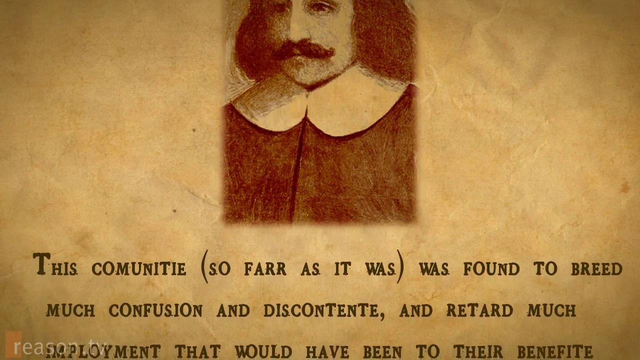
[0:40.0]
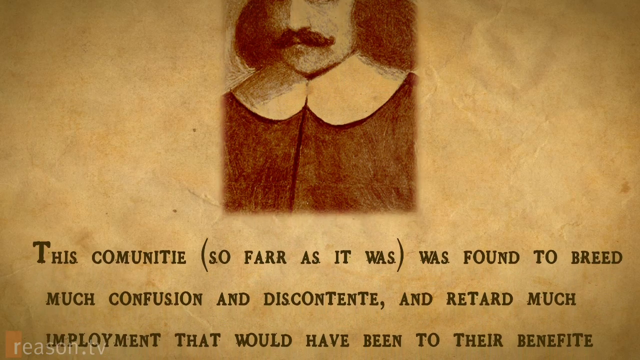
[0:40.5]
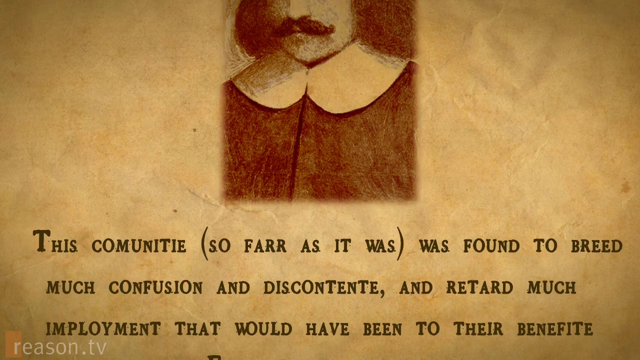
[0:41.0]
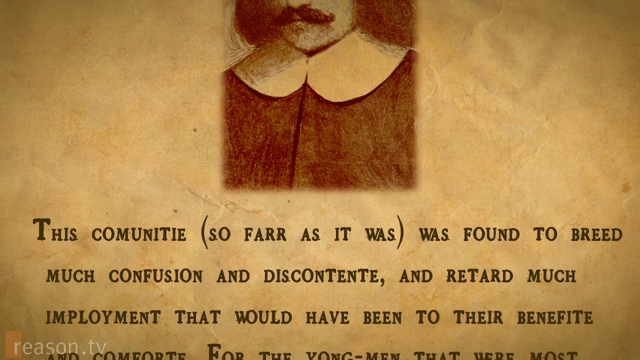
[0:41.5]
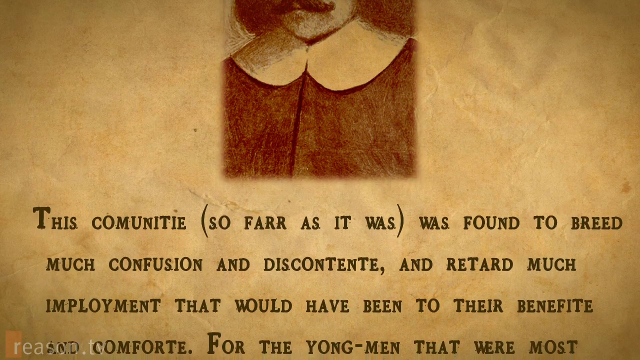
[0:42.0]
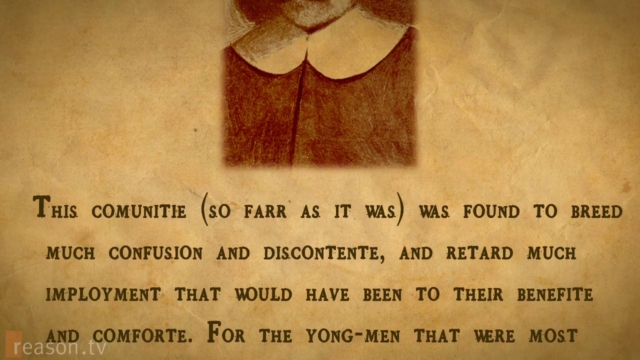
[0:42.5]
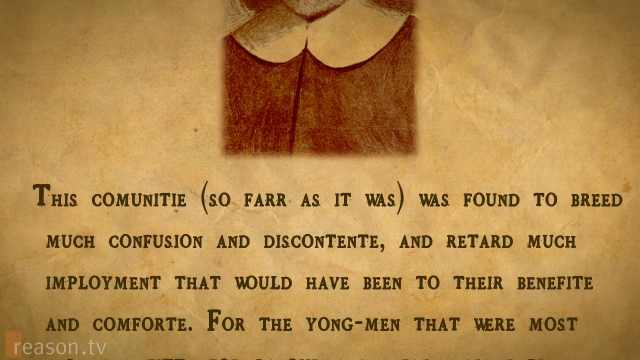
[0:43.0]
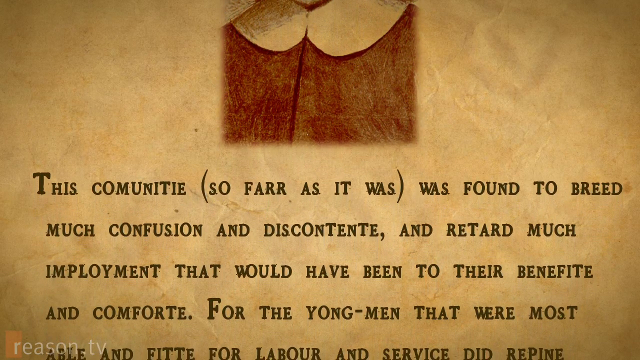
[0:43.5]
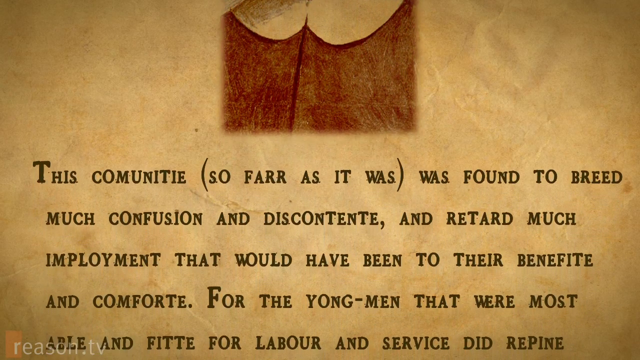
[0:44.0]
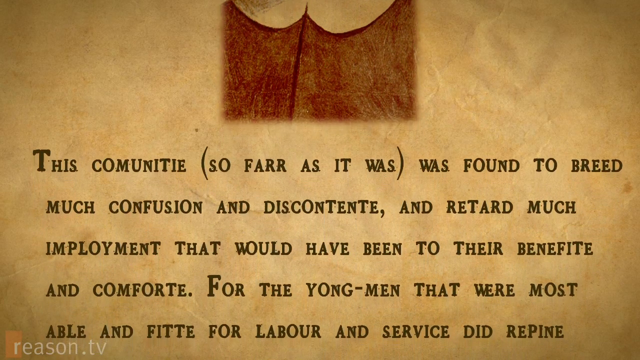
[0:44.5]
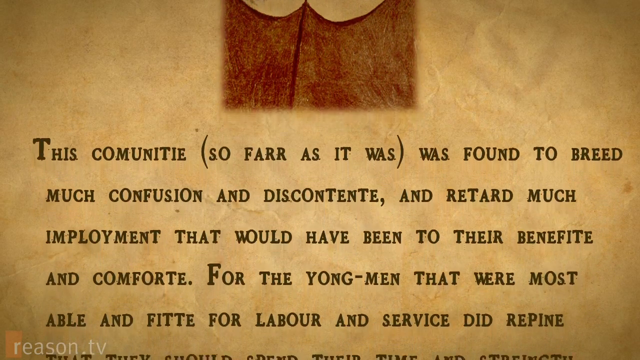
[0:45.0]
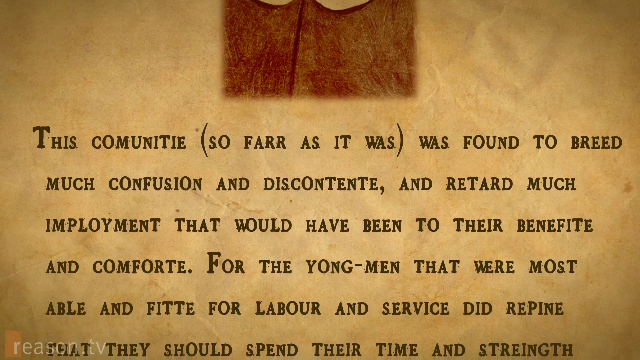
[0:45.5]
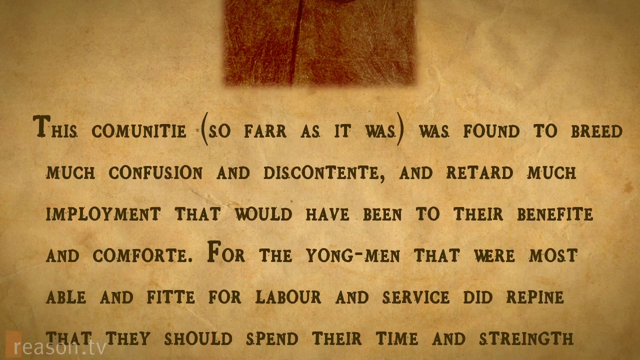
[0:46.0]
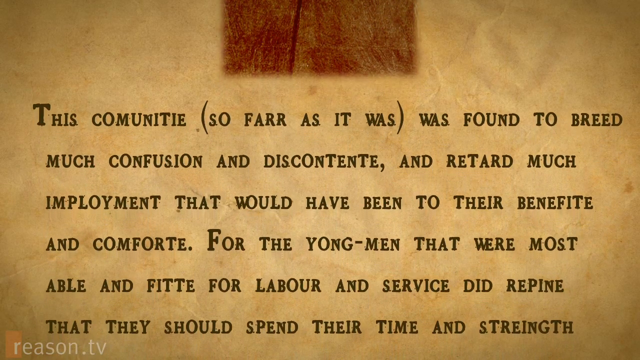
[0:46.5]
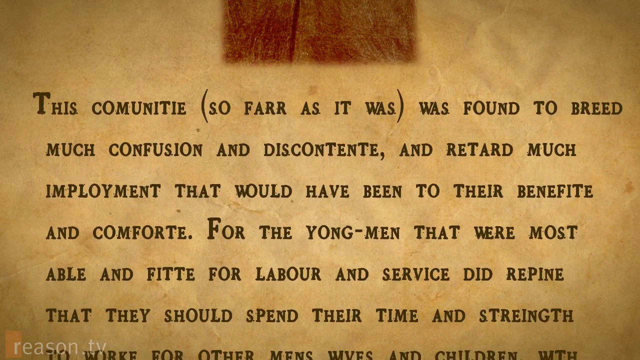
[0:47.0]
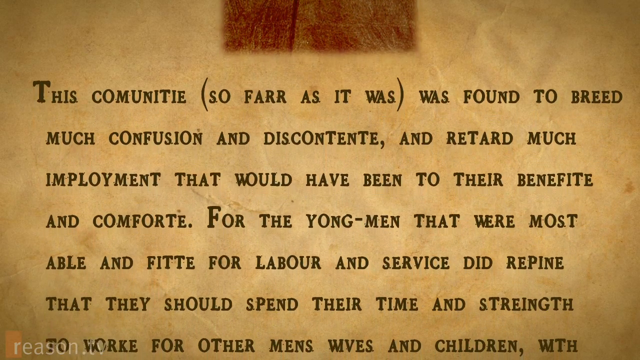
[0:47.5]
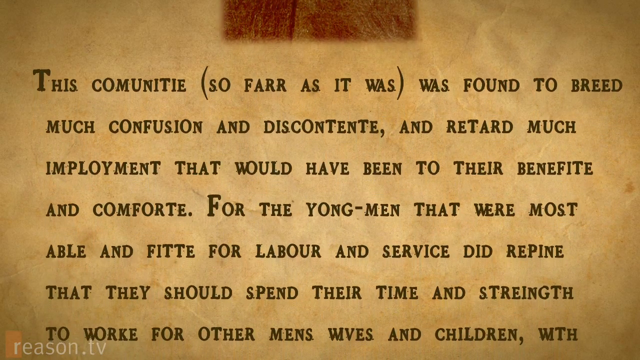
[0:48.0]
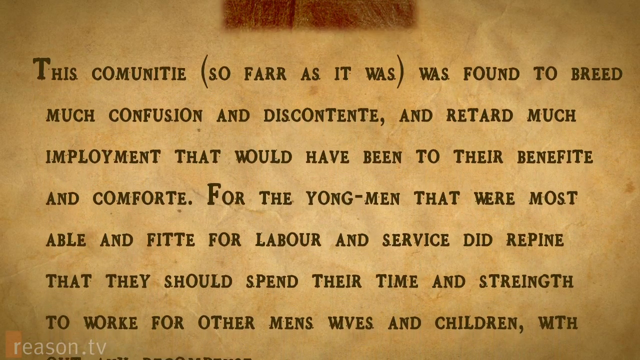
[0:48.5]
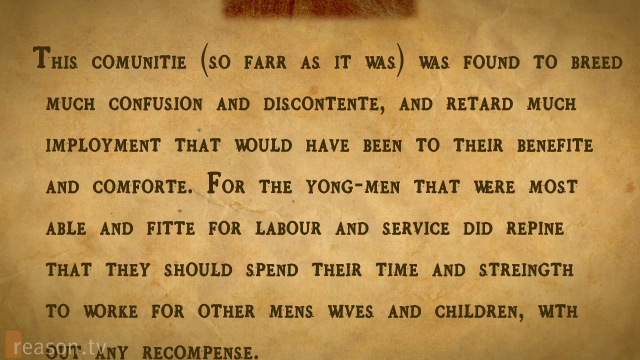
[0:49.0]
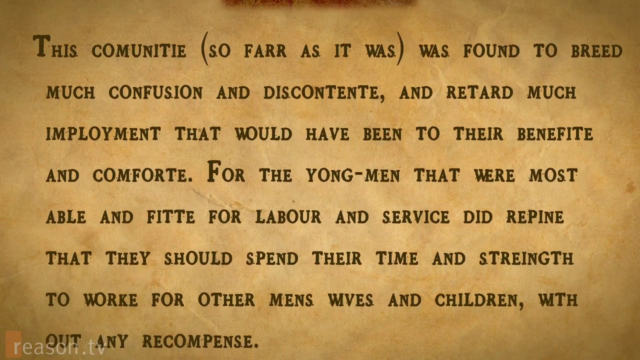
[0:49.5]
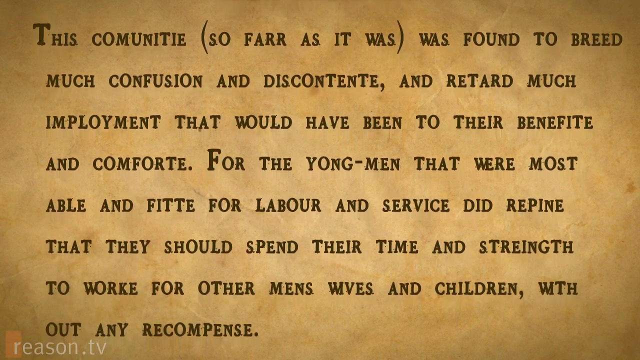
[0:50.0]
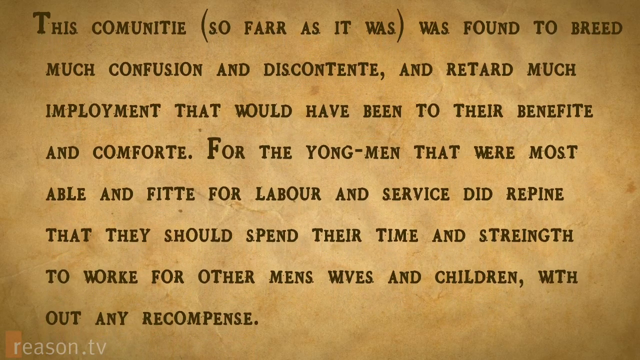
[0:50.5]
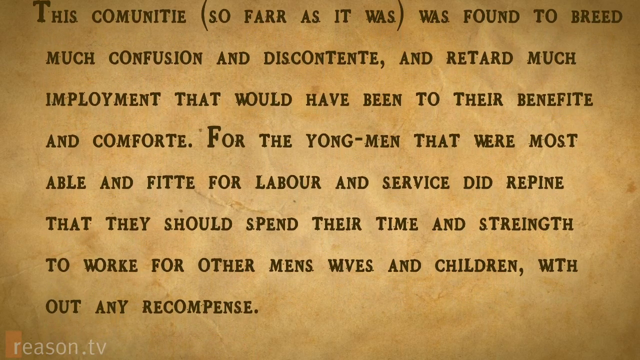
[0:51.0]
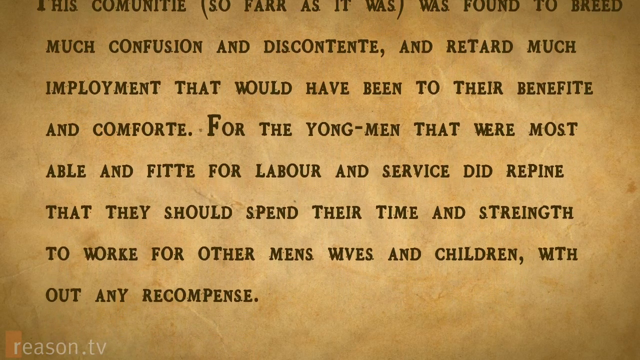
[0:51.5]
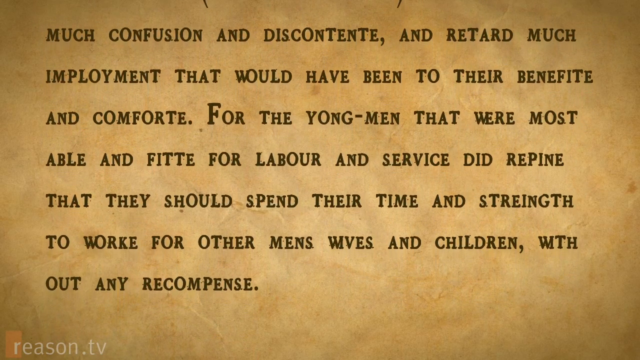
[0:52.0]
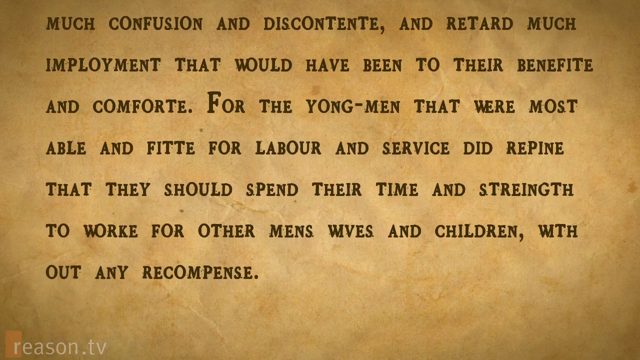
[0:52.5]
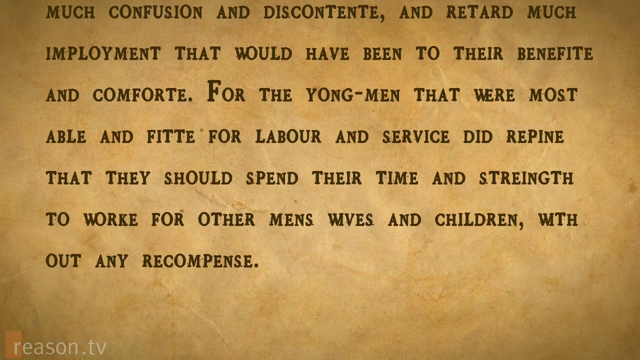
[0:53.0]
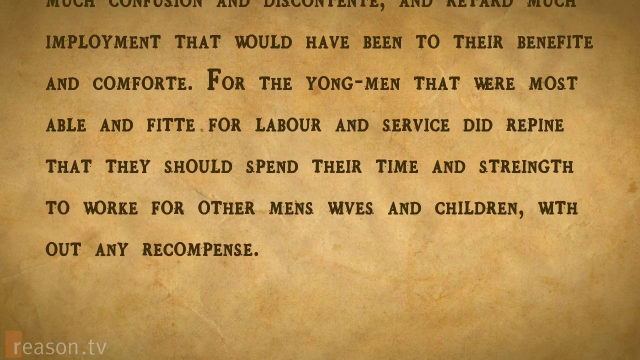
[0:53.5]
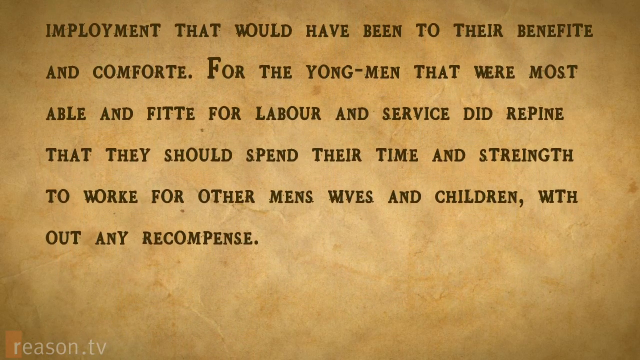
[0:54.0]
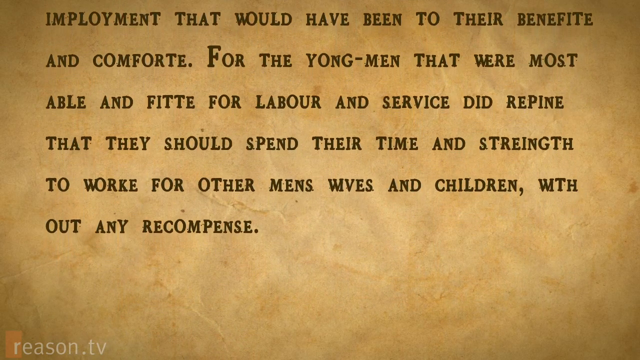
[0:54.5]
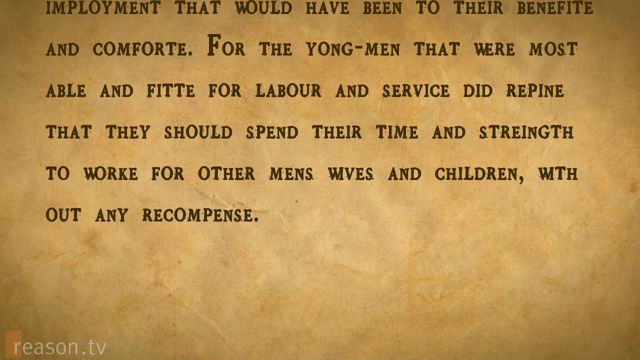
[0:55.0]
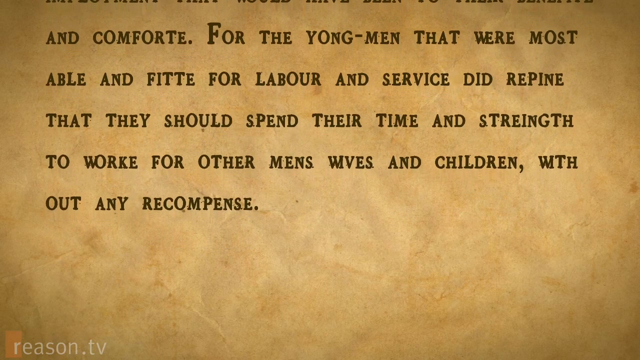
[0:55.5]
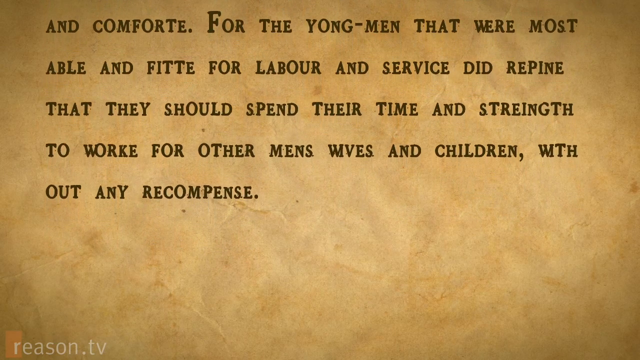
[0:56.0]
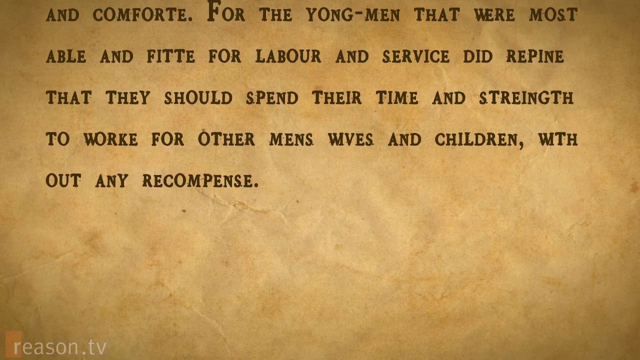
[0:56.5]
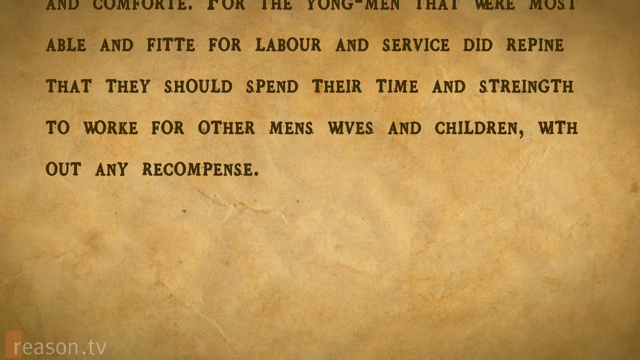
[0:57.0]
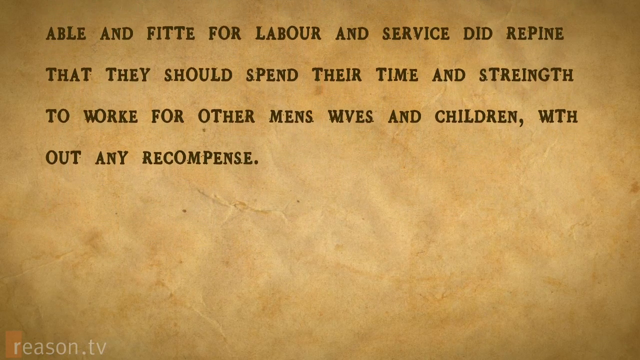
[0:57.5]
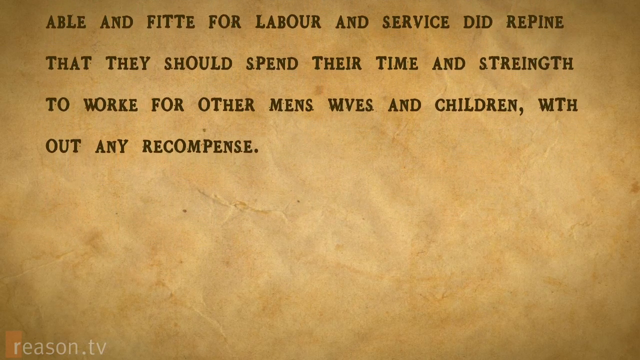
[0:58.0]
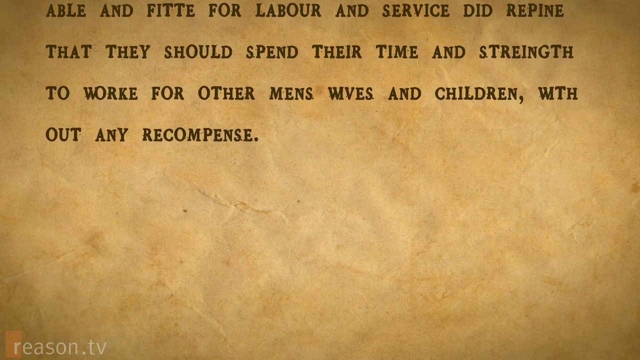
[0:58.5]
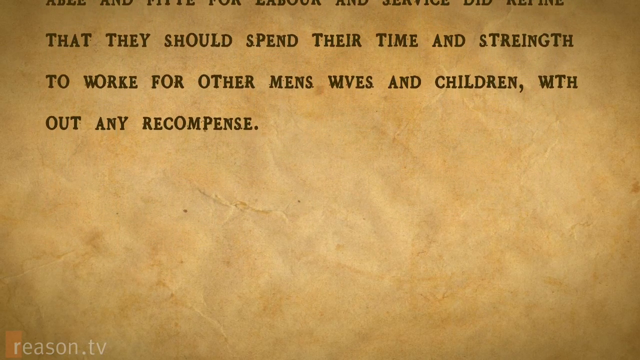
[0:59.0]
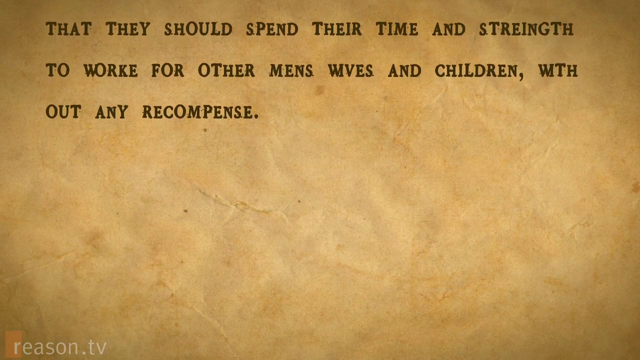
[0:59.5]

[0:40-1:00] On the old paper background there is a picture of a man from a really long time ago, and the image starts to move up. Text in a goldish brown color moves up the screen, reading in part "so far as it was" and "was found to breed much confusion and discontent and retard much employment that would have been to their benefit and comfort for the young men that were most able and fit for labor and service did repine that they should spend their time and strength to work for other men's wives and children's without any recompense." Many words are spelled differently from modern spelling: "young men" is spelled "yong men," "benefit" is spelled "benifite," "employment" has an I instead of an E, and "work" has an E on the end. Each new sentence starts with a bold letter; for example, the T at the start is bolded while the rest is normal.